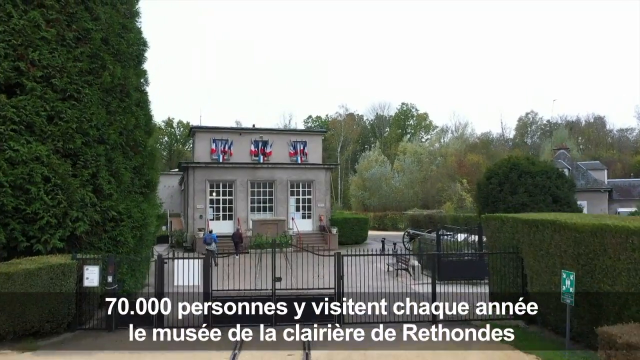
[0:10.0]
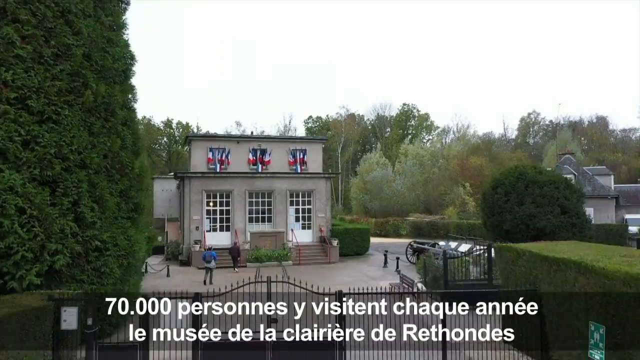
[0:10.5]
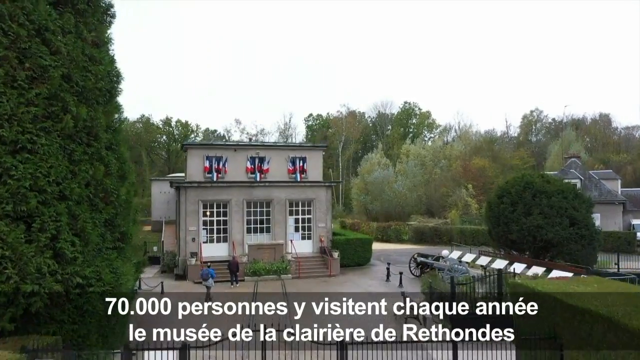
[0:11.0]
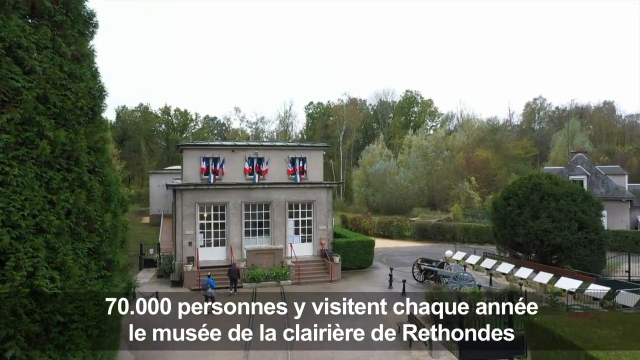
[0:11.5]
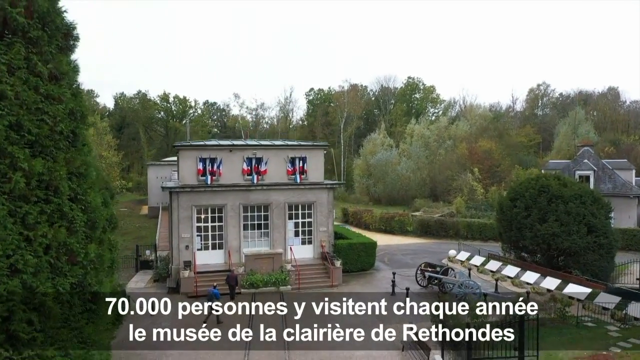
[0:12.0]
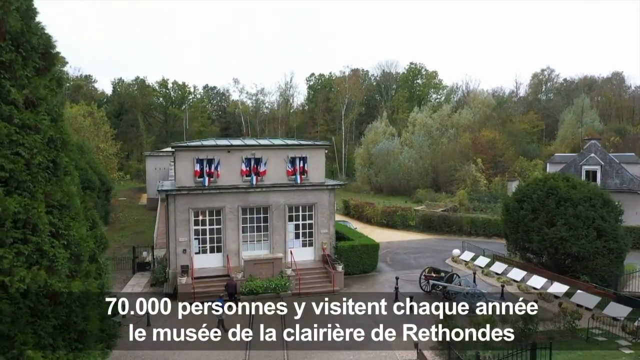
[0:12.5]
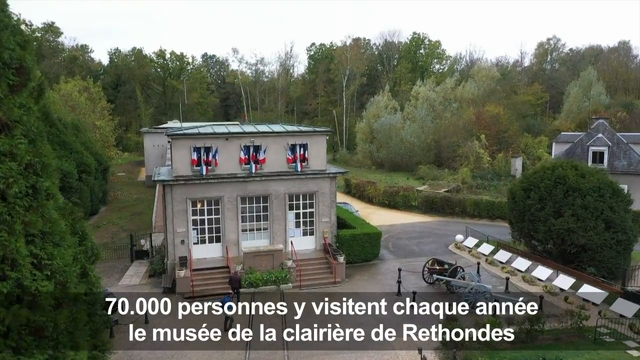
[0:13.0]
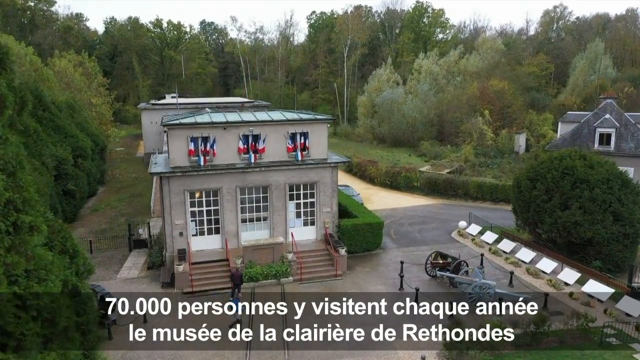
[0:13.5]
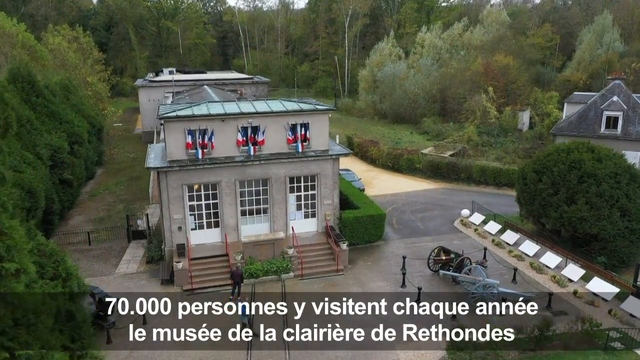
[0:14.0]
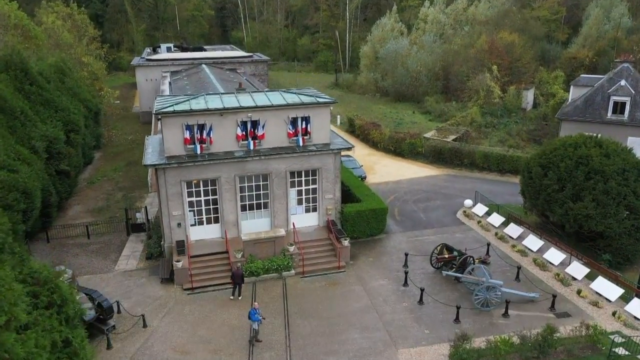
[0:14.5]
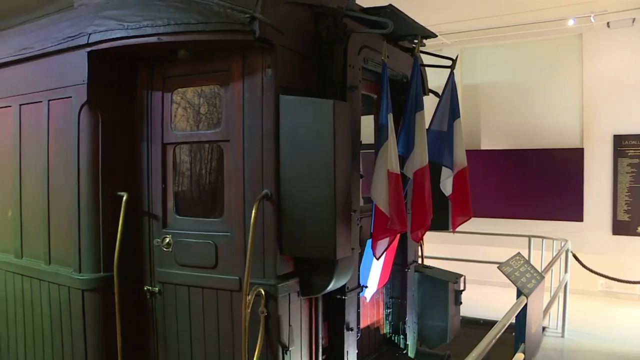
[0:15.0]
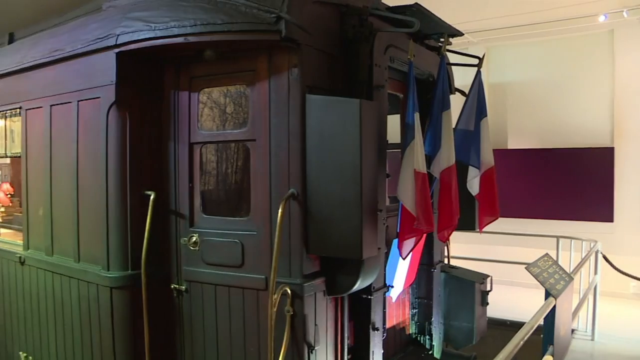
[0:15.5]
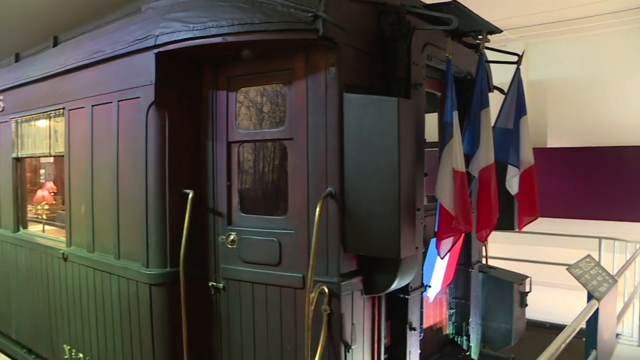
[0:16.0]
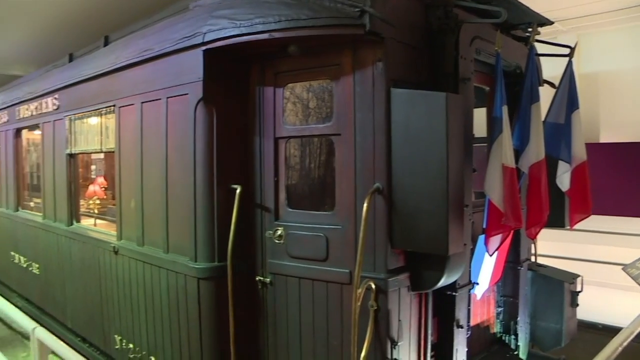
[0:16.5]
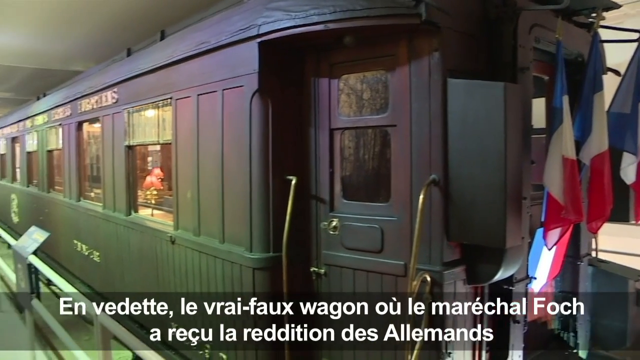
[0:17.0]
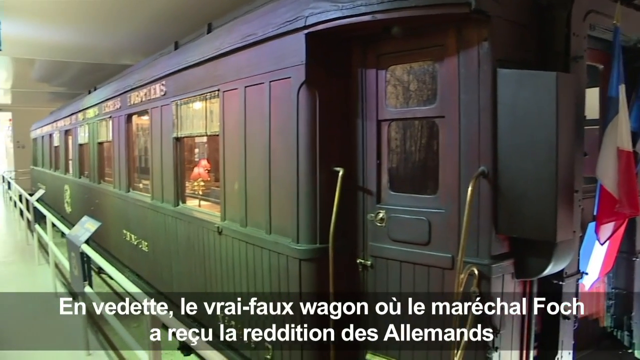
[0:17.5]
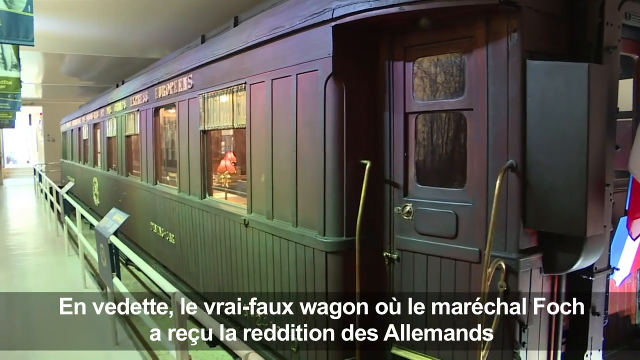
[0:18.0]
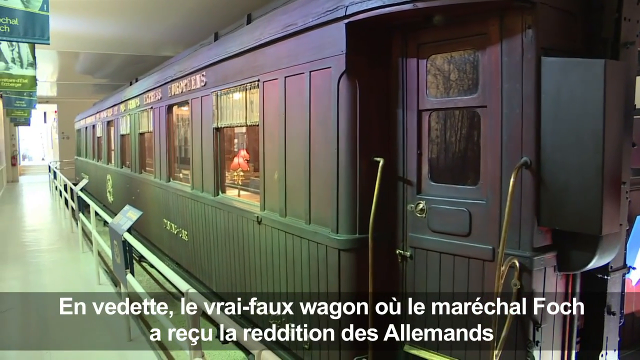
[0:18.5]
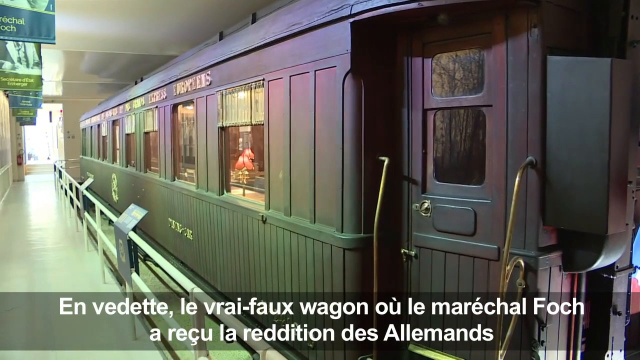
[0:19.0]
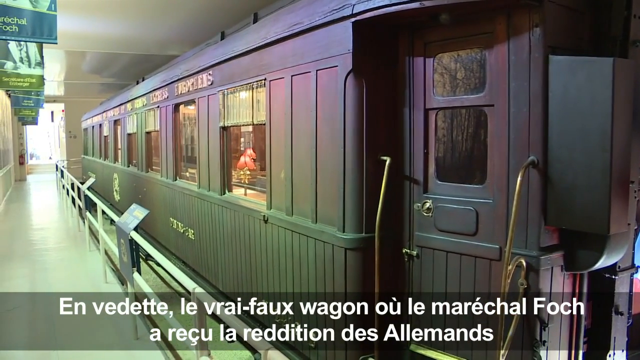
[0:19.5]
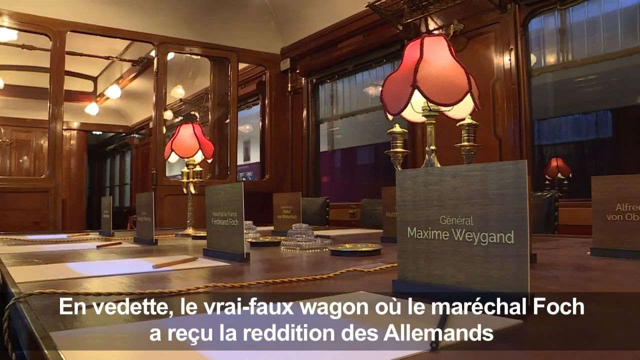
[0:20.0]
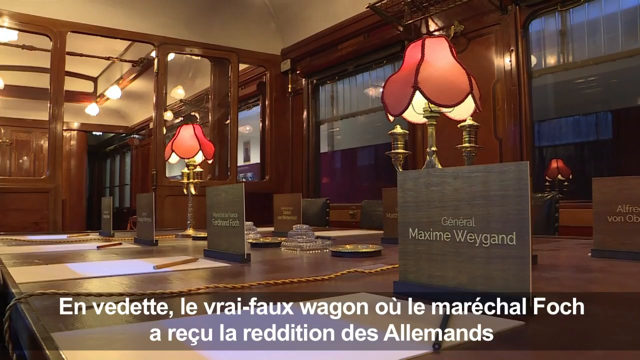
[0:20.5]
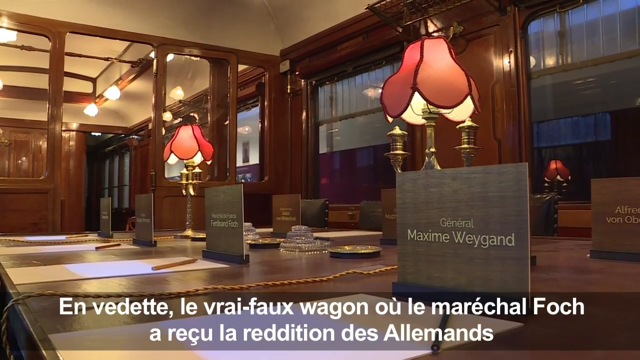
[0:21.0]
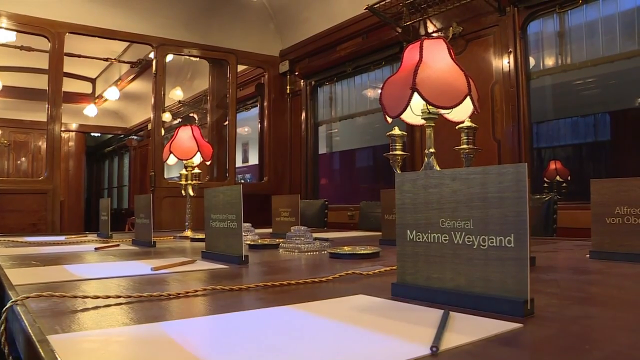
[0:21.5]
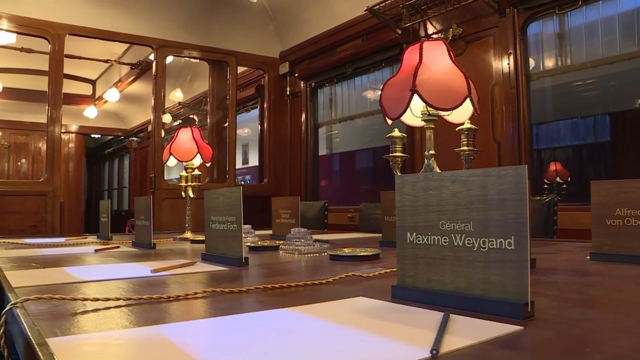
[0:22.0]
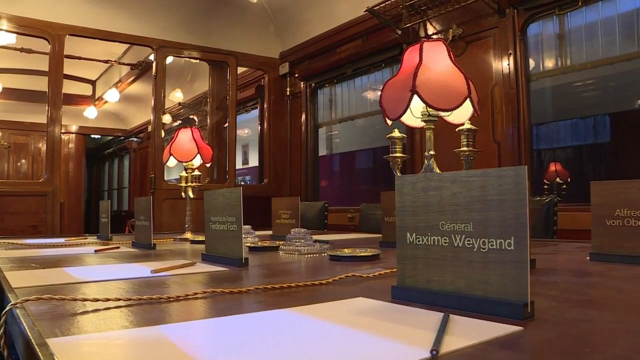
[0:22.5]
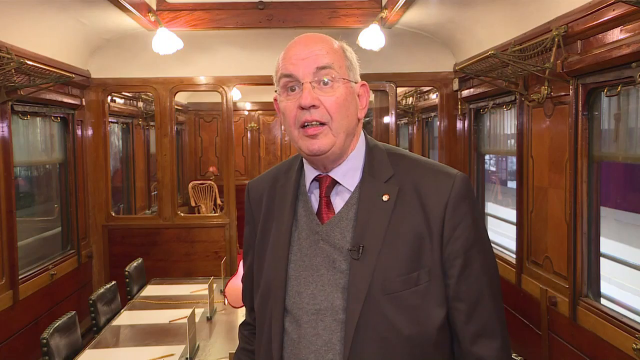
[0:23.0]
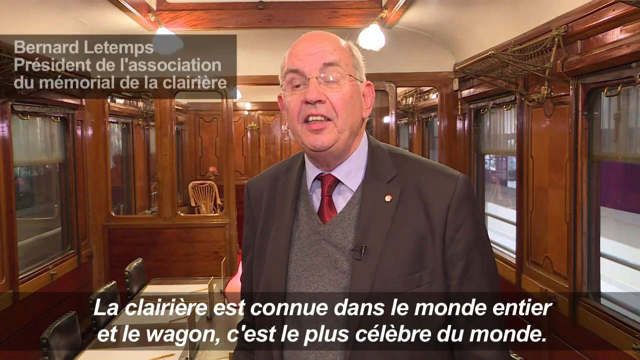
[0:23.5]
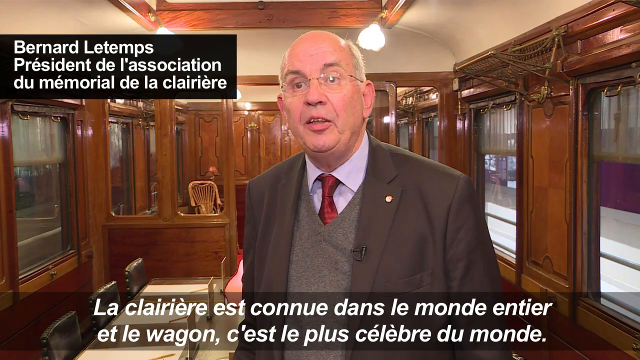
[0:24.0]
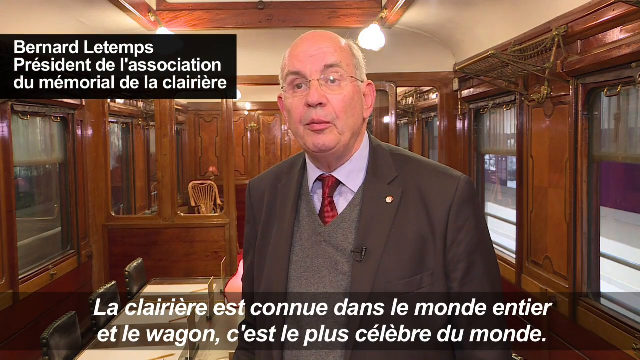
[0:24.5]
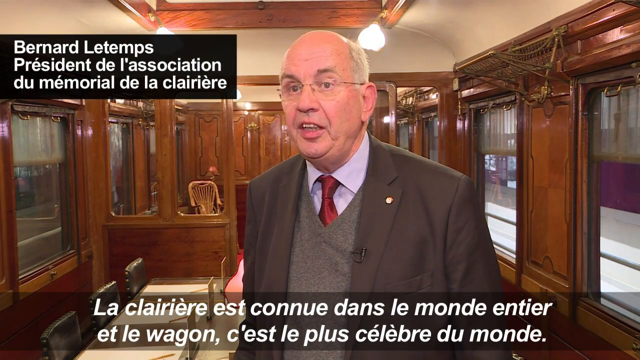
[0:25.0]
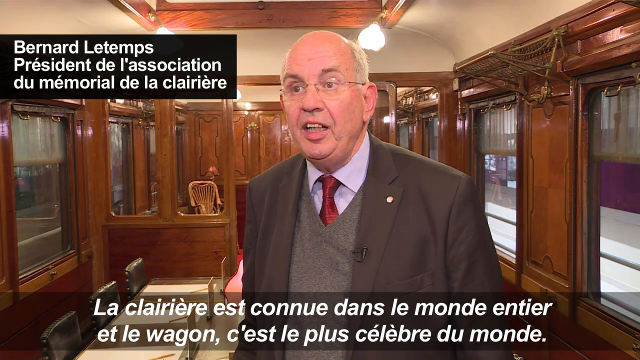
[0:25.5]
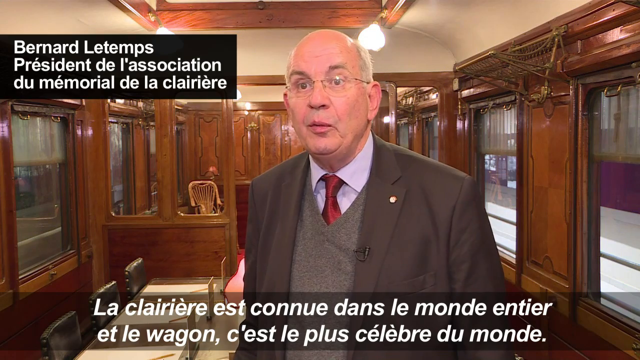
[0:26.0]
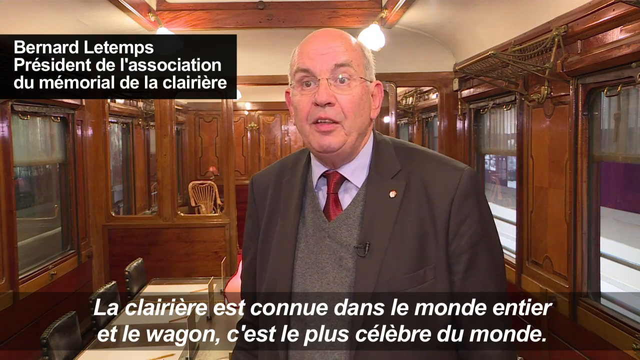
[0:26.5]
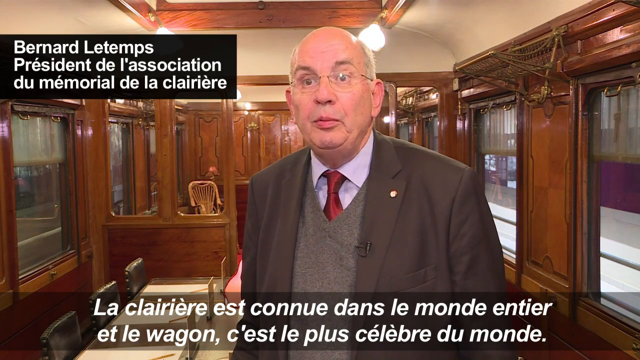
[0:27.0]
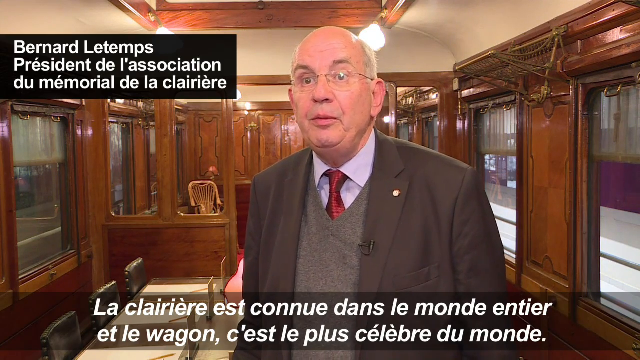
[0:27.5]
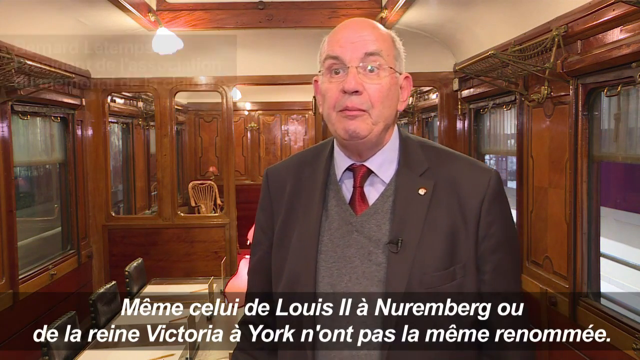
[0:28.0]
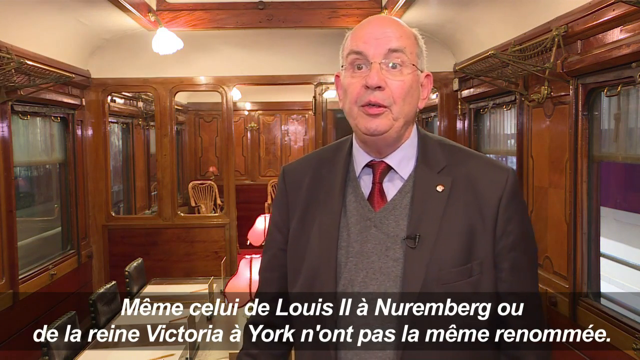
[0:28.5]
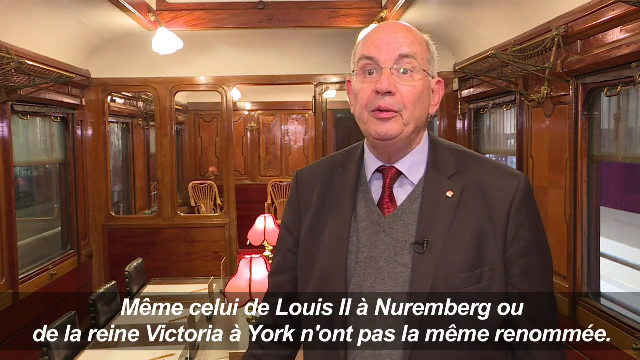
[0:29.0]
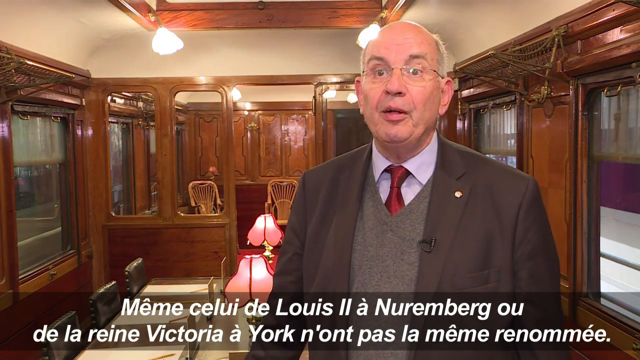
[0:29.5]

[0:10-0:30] A shot shows the front of the Muséum de la Clarière de Réthondes, with three large doors and windows at the front. Two gun carriages are in the front area of the museum, on the right-hand side. Inside the museum, a carriage appears with three French flags at the front and some brass safety handles; the carriage appears red and green in colour. A caption at the bottom begins "En vedette, le vrai faux wagon où le marechal Foch". The view then moves inside the carriage, showing a large table with two red lamps in the centre. The lights are on, and the wooden panelling and partitions of the carriage are visible. The caption on the bottom of the screen says "On vedette le vrai faux". A slightly older gentleman with glasses, in a brown suit, red tie and grey jumper, talks to the camera from inside the carriage. The caption says "La carrière est connue dans le monde entier, et le wagon c'est le plus célèbre du monde." The gentleman is Bernard Le Temps, President de l'Association du Memorial de la Guerrière. He slightly hunches his shoulders as he speaks, and the next caption says "Meme celui de Louis II a Nuremberg ou de la reine Victoria a York n'ont pas la meme renomee".